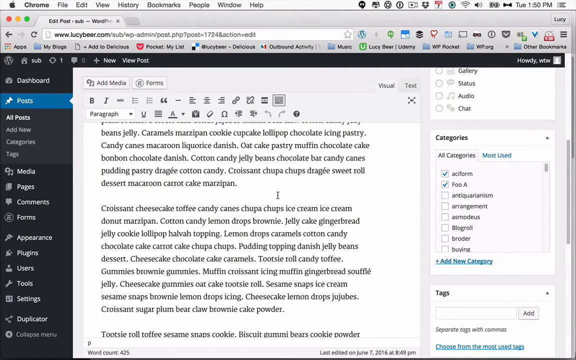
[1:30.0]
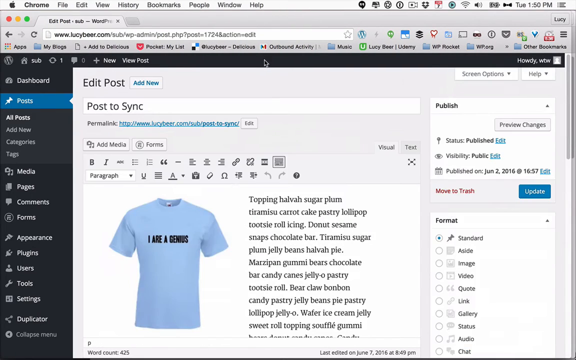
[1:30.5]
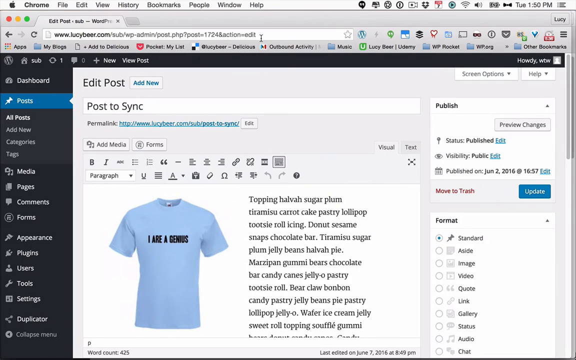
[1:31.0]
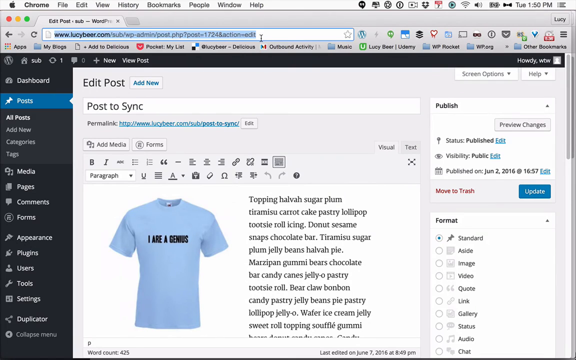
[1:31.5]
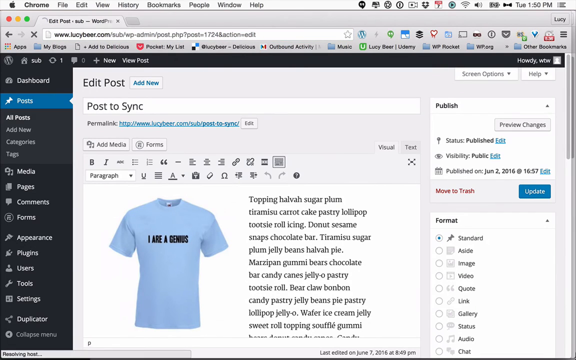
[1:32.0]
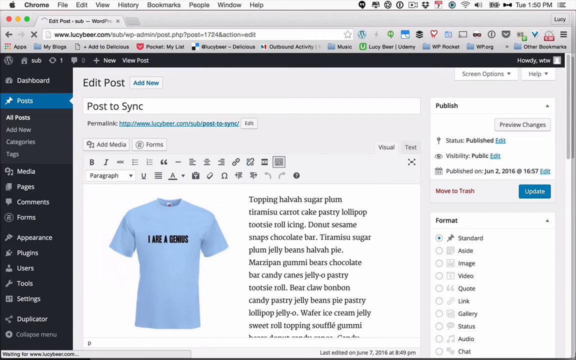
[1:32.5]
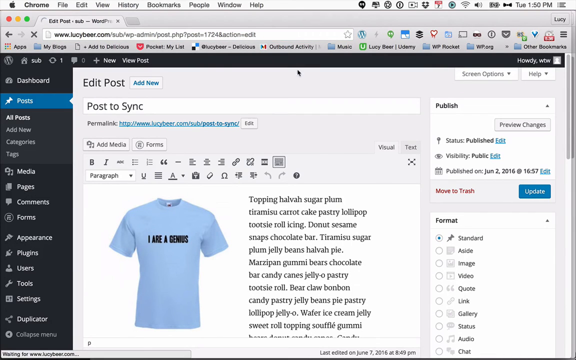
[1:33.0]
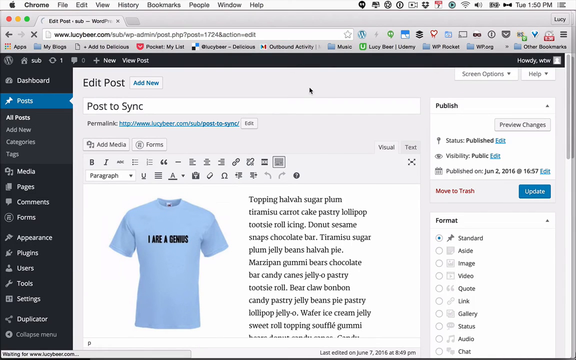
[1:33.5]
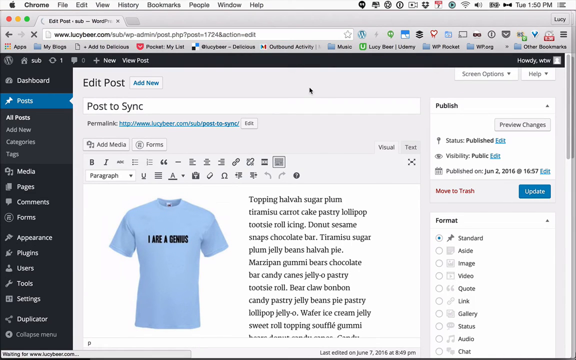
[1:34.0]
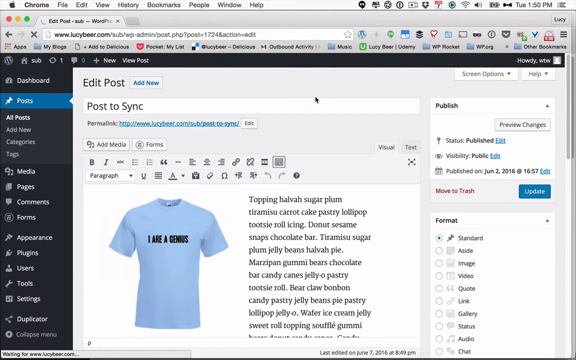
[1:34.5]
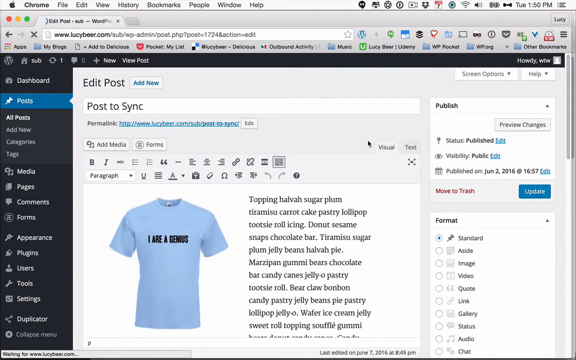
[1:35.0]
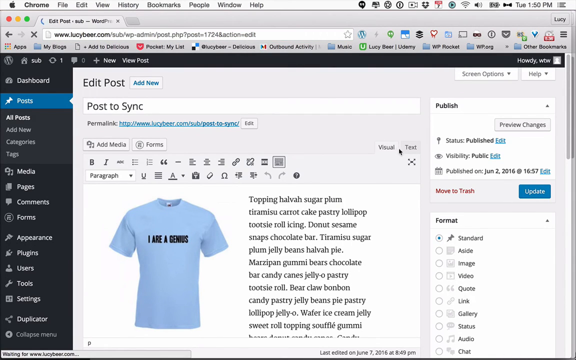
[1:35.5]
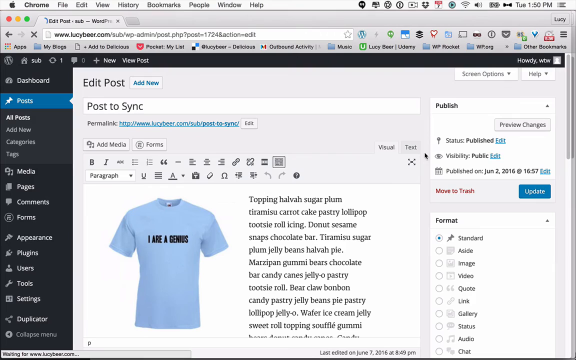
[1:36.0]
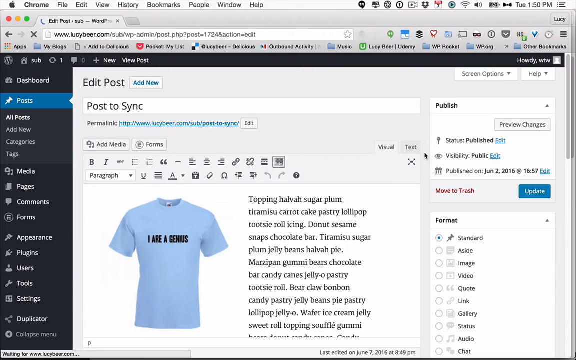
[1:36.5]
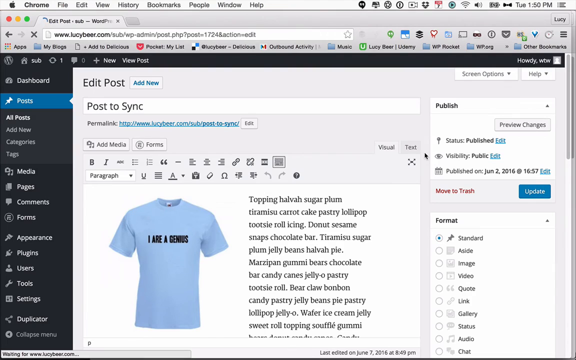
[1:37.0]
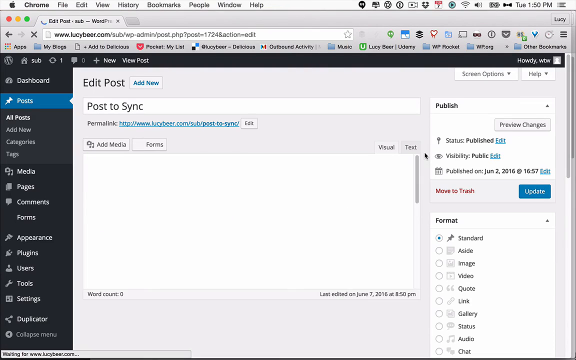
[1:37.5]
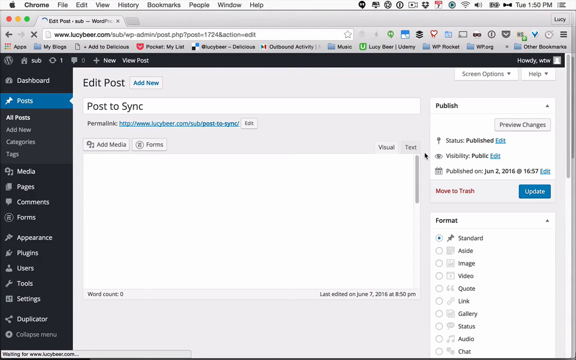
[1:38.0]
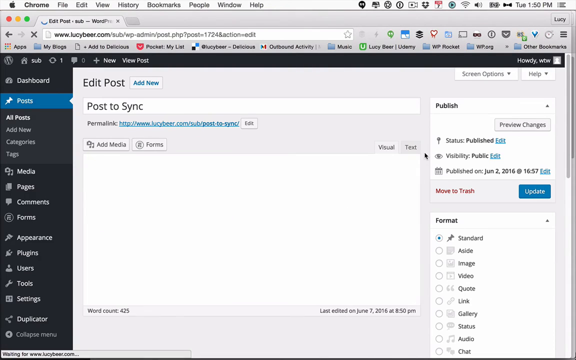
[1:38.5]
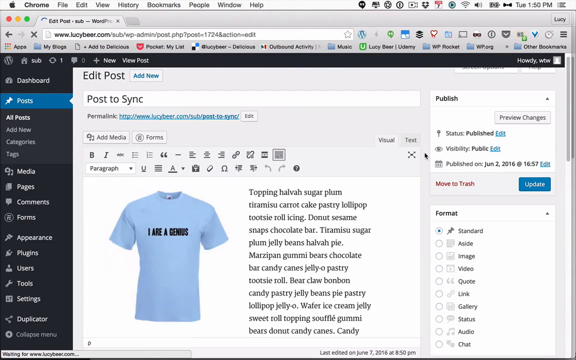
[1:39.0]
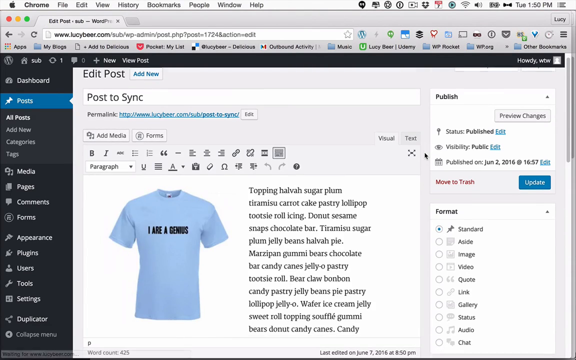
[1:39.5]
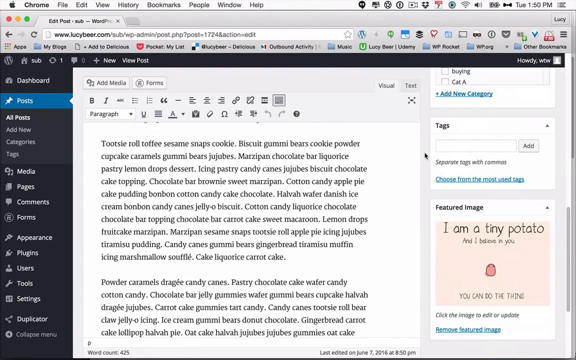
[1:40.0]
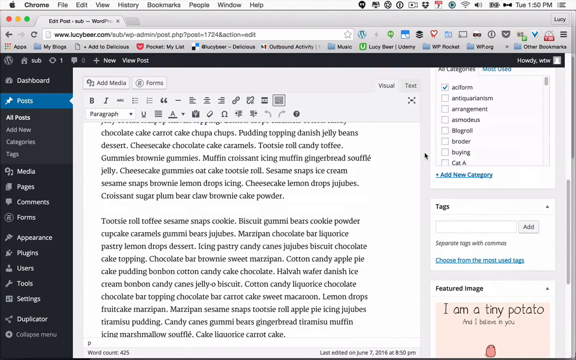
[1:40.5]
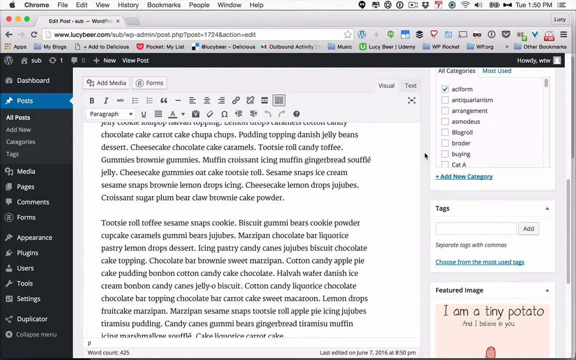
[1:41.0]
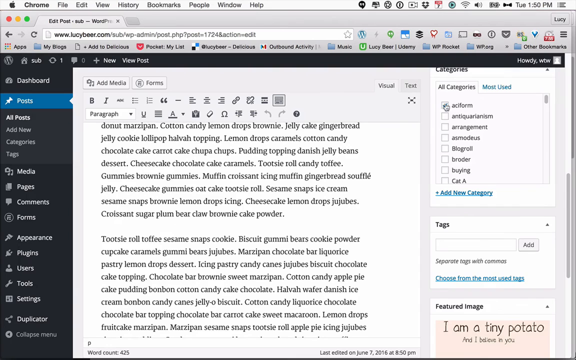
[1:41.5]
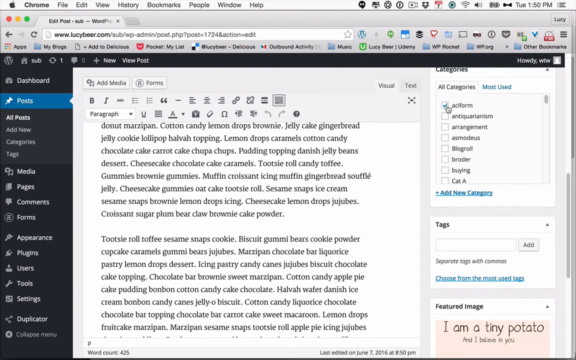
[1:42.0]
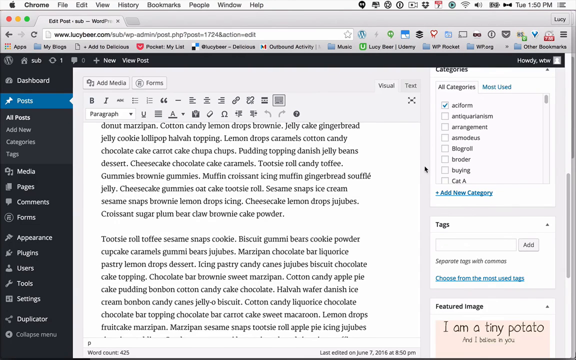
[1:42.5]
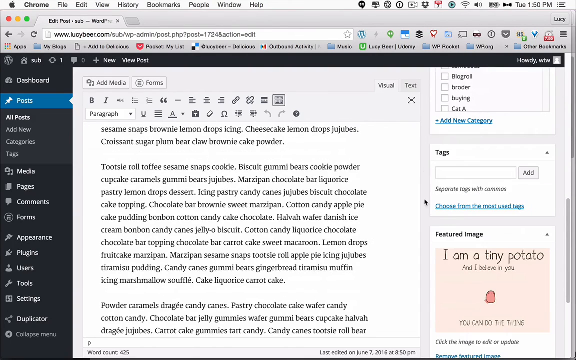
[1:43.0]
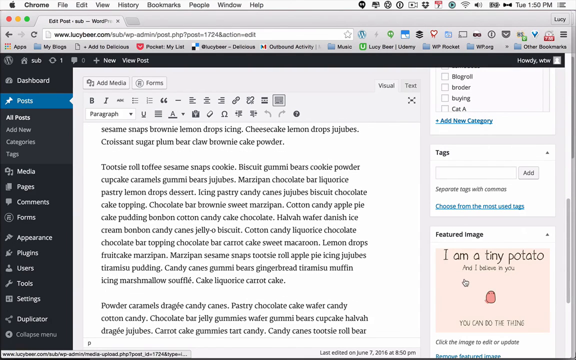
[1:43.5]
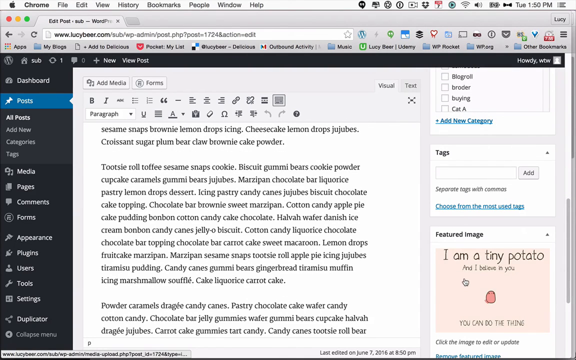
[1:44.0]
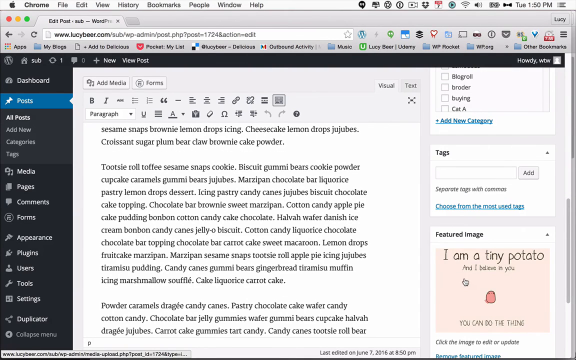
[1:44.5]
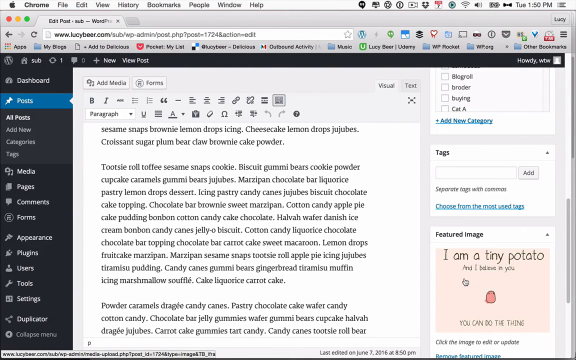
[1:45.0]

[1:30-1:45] The "I are a genius" T-shirt is still shown. He moves his cursor back and forth across the screen and brings up what turns out to be the same "I are a genius" screen. In the bottom right, the cat has been replaced by a featured image that says "I am a tiny potato," with a little tiny potato on the bottom portion. The image also says "I believe in you" and "You can do the thing." He apparently is making slogans for T-shirts.